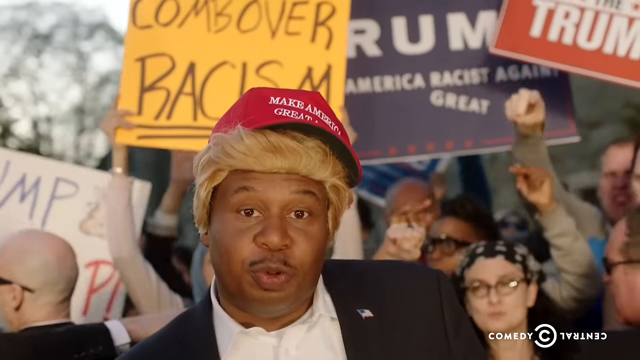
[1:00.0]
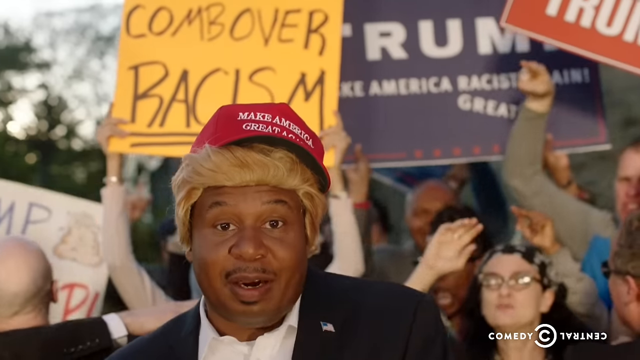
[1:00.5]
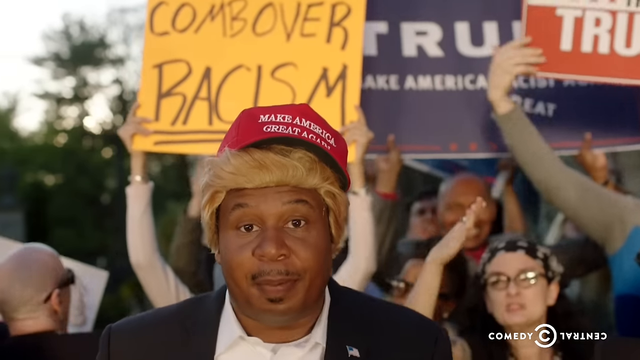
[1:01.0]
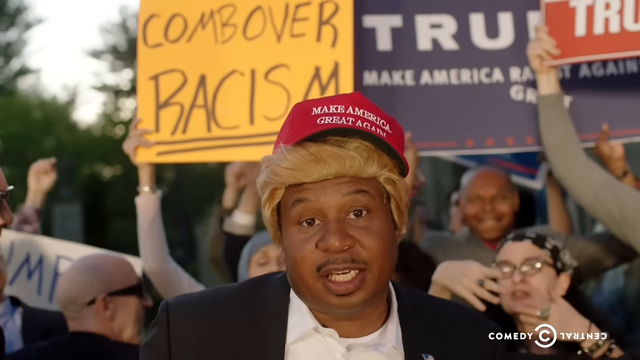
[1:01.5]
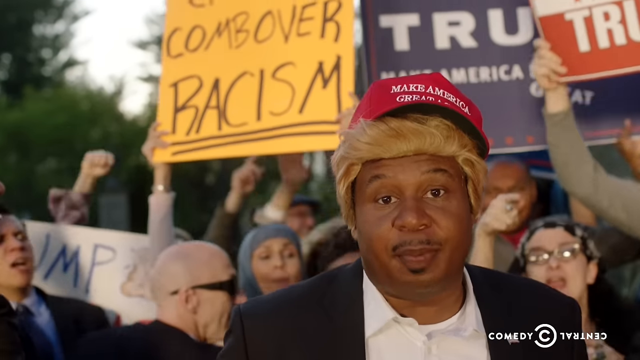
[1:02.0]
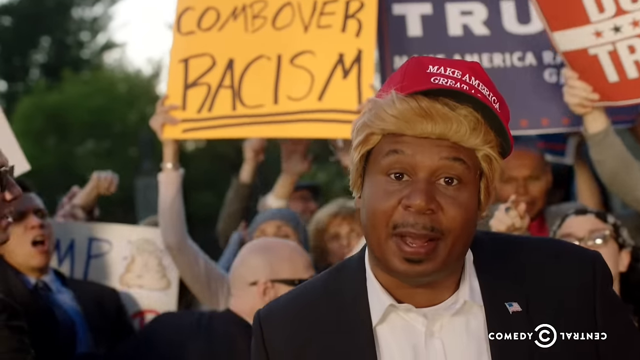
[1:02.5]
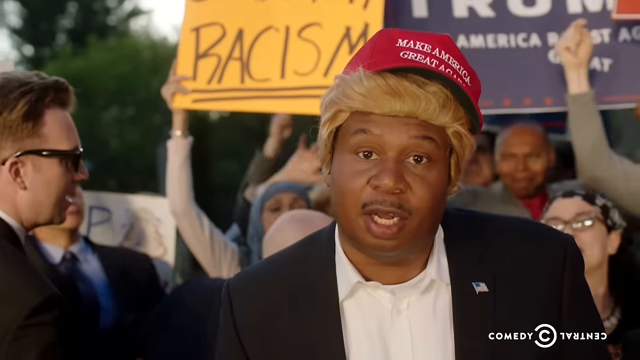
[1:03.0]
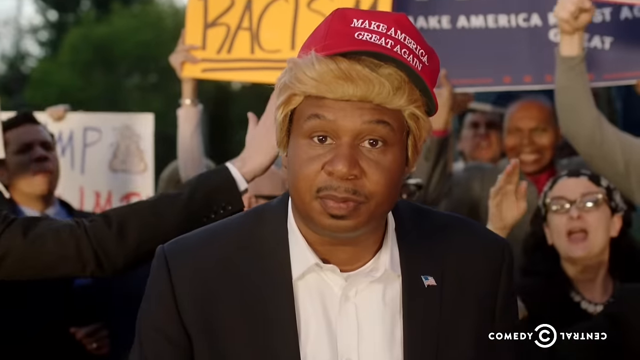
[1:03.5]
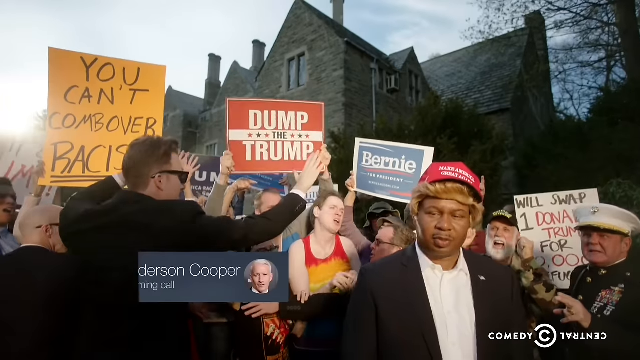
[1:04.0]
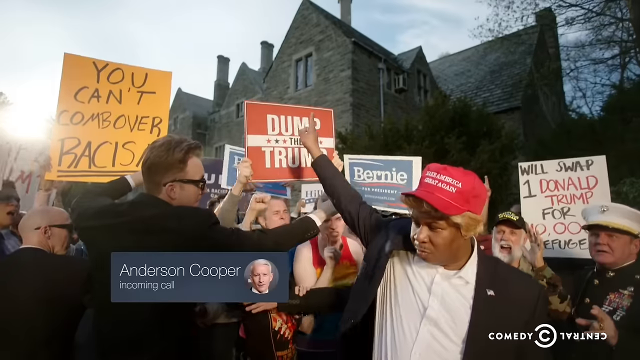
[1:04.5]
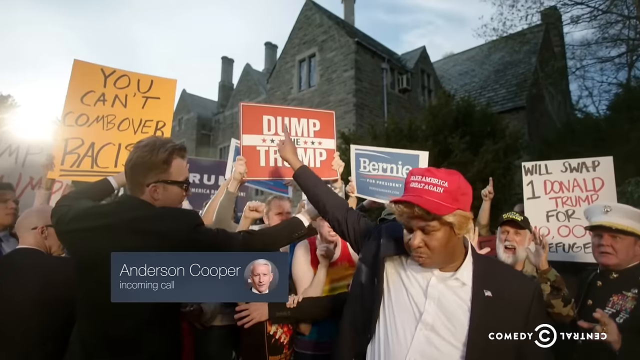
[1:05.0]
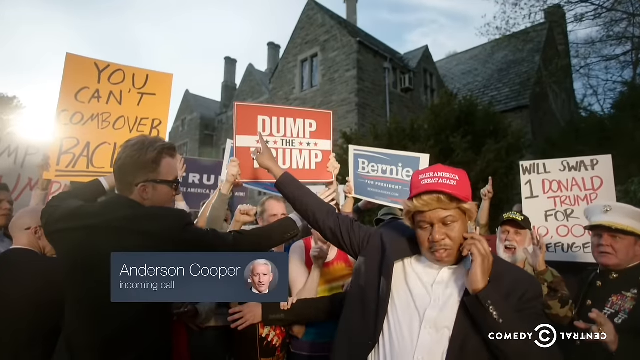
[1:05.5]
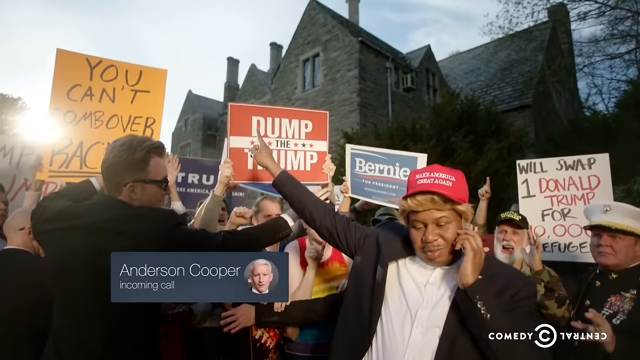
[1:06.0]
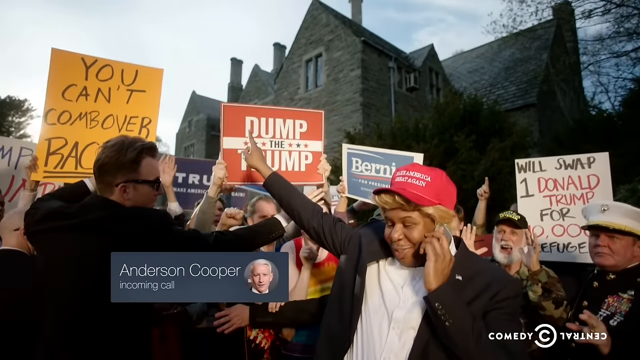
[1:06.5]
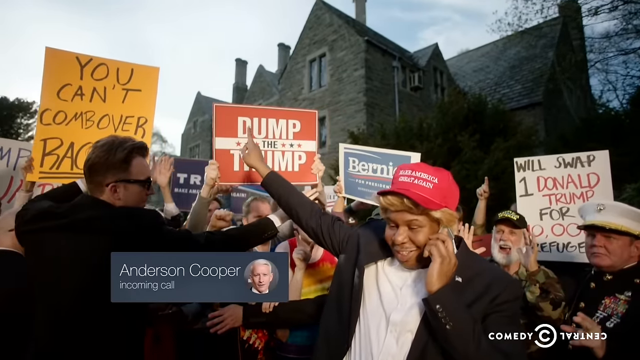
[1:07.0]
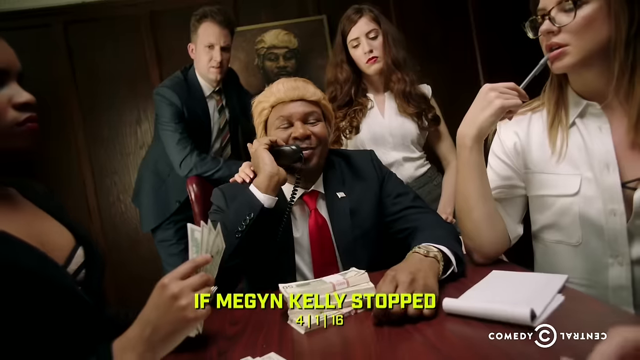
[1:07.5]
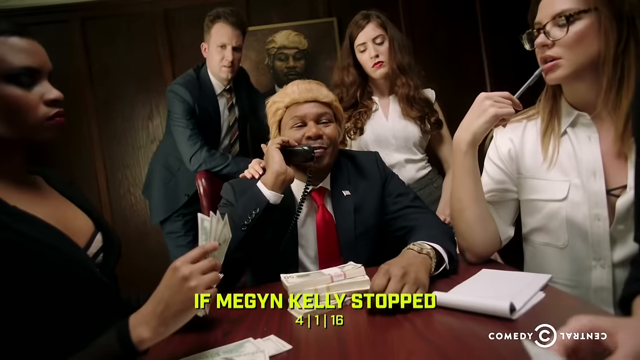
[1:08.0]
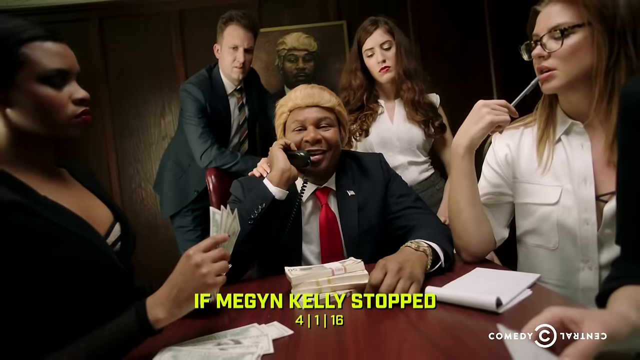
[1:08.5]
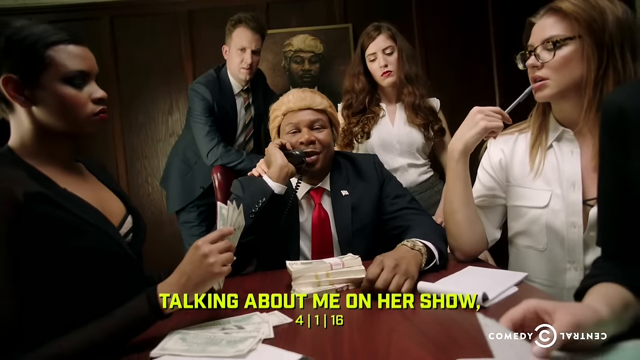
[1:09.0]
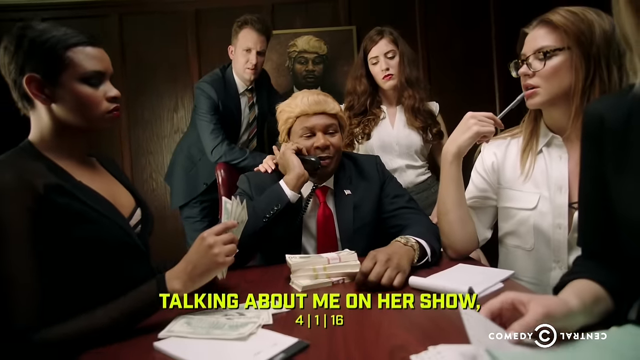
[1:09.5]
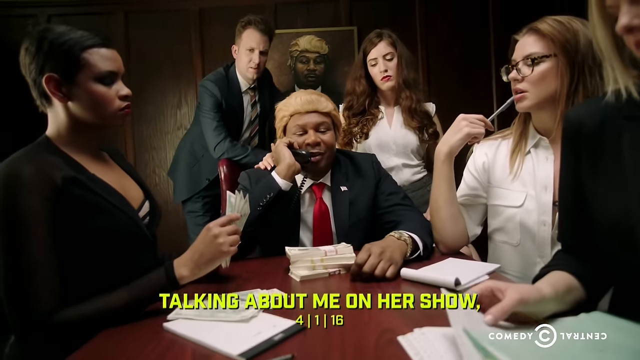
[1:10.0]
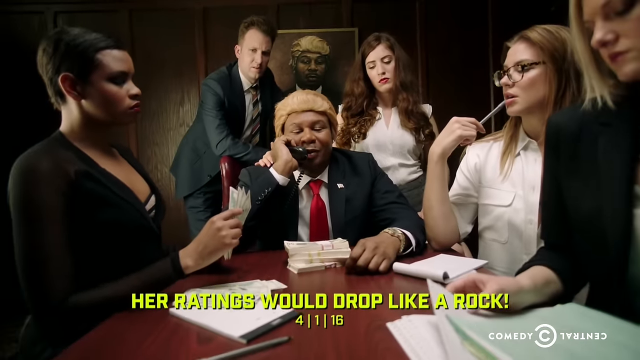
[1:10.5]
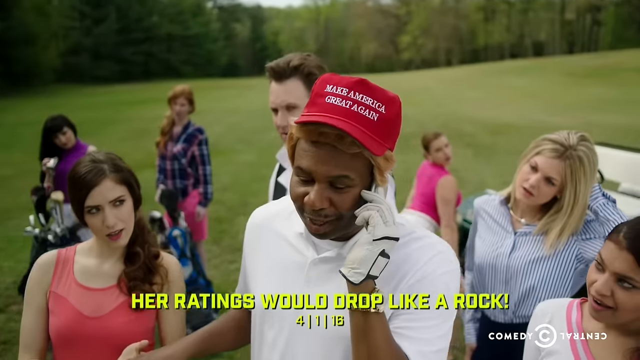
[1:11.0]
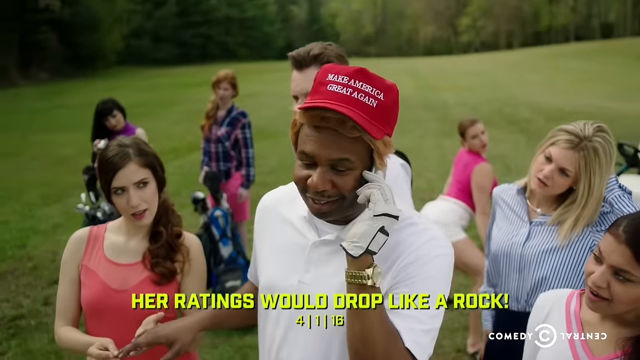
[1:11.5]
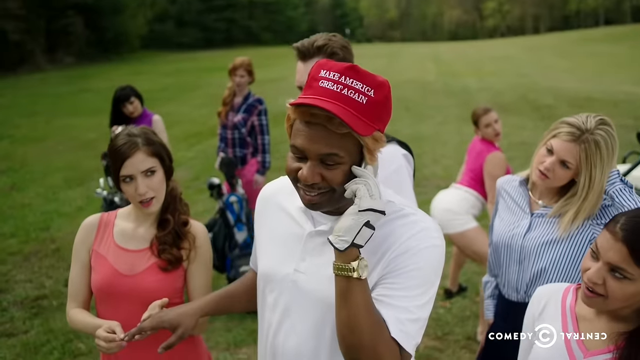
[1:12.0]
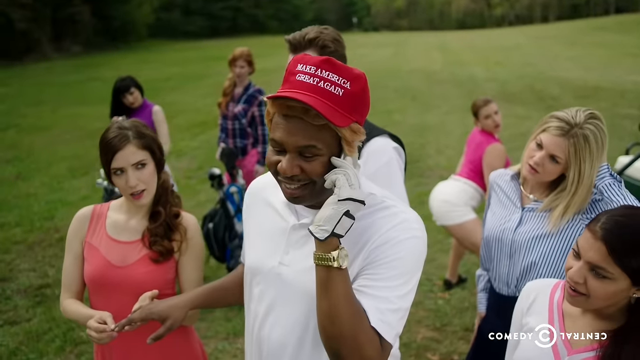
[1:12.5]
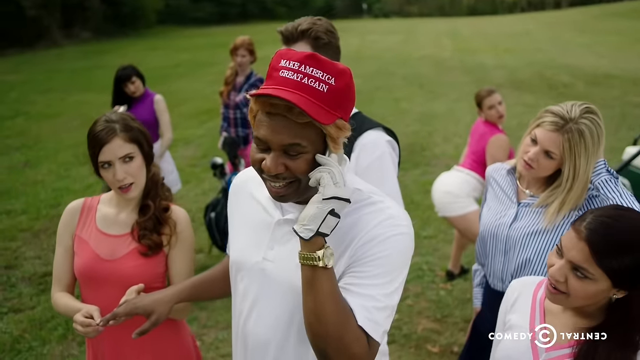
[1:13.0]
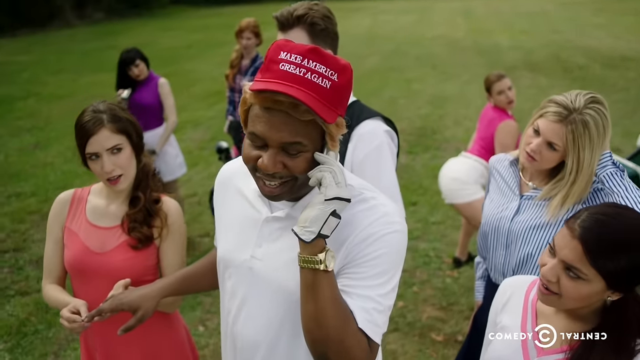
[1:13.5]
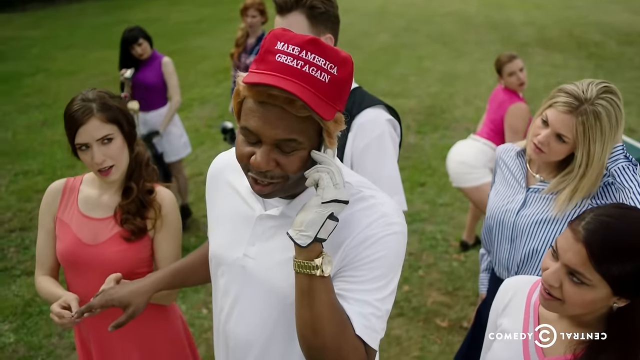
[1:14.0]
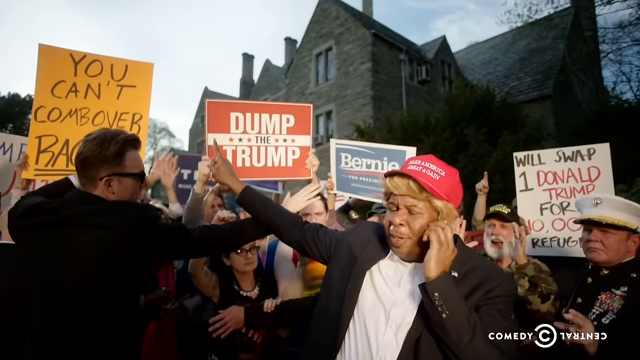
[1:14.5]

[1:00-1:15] Donald Trump appears to acknowledge the crowd, waving his hand in the air and pointing one finger. He then brings what appears to be a cell phone toward the left side of his head. The crowd is still chanting, and several signs against Donald Trump remain visible, including ones reading "dump the Trump" and Bernie Sanders signs, plus a new sign reading "we'll swap one Donald Trump for 10,000 refugees" and a yellow sign. The video transitions to Donald Trump sitting at a table while women count money and sit next to him. What appears to be a male in the background rubs his shoulders, and Donald Trump appears to be speaking on the phone. The video then pans to another scene where Donald Trump is in a caddy uniform, appearing to wear a white glove on his left hand, with his phone. Several women and several golf carts are in the background of the golf setting, and several women appear to be making flirtatious actions toward the Donald Trump actor.